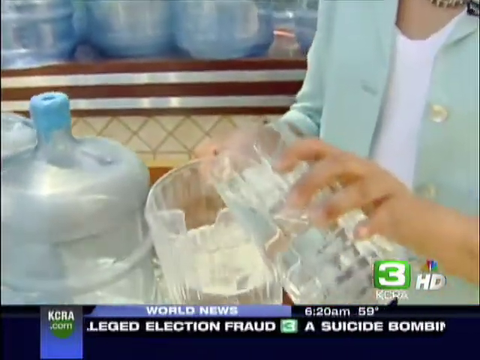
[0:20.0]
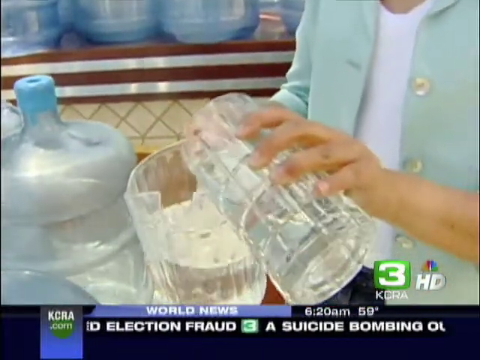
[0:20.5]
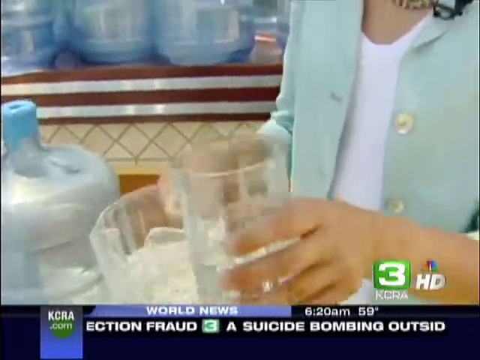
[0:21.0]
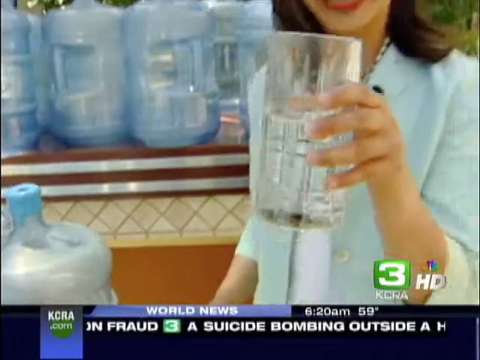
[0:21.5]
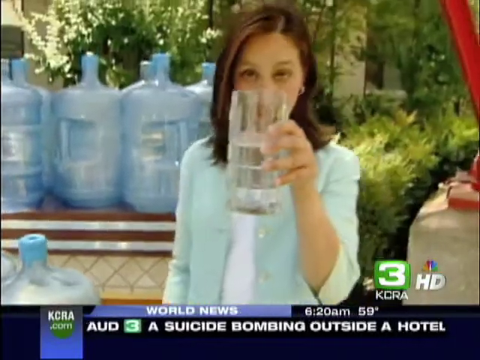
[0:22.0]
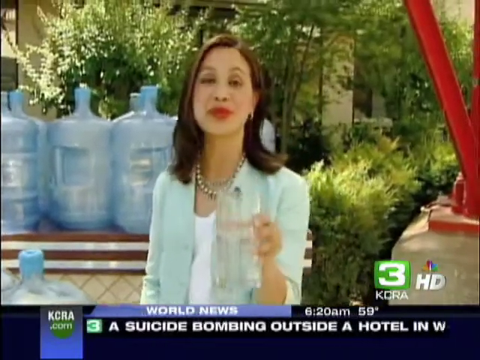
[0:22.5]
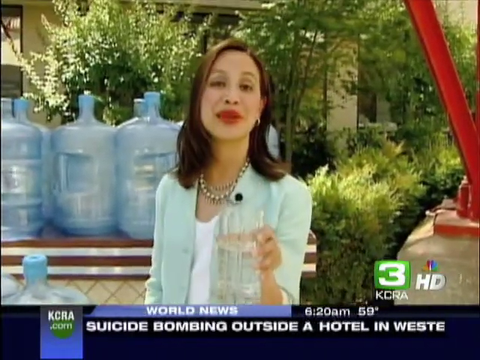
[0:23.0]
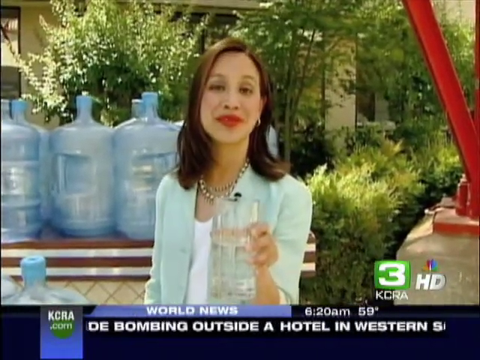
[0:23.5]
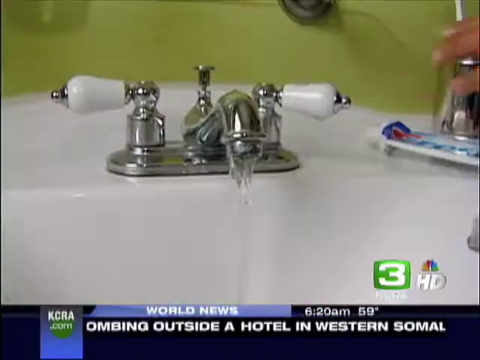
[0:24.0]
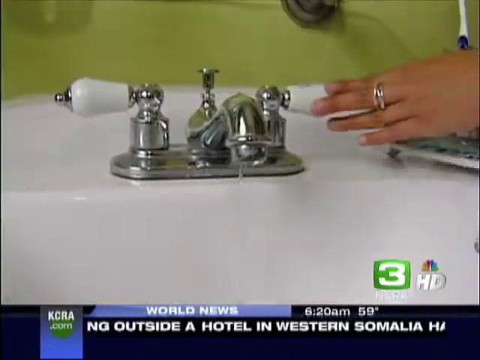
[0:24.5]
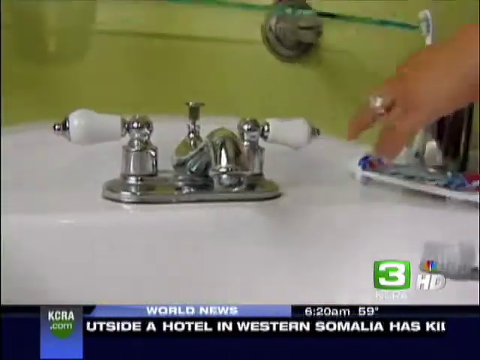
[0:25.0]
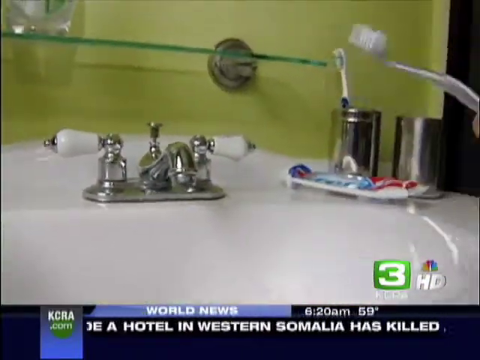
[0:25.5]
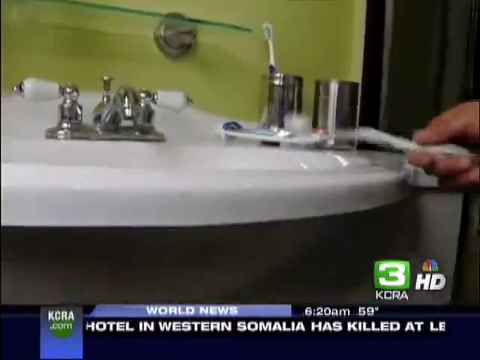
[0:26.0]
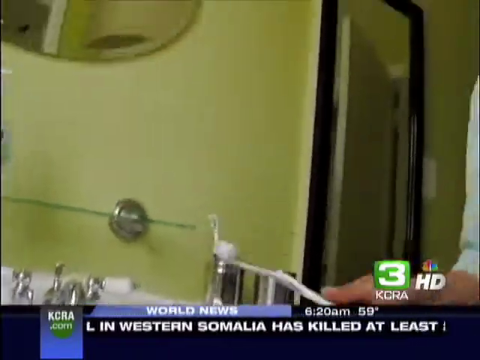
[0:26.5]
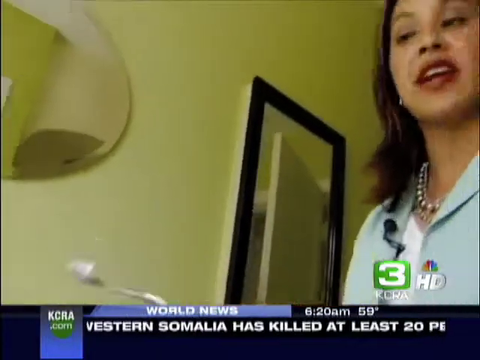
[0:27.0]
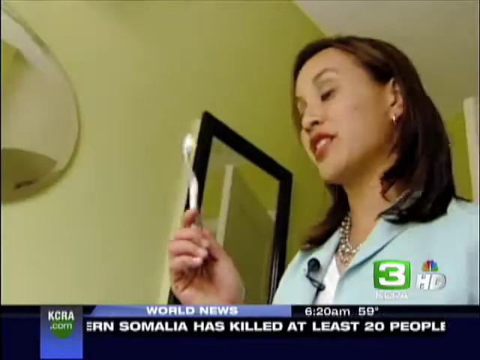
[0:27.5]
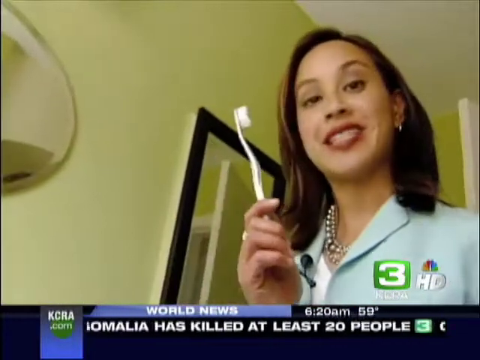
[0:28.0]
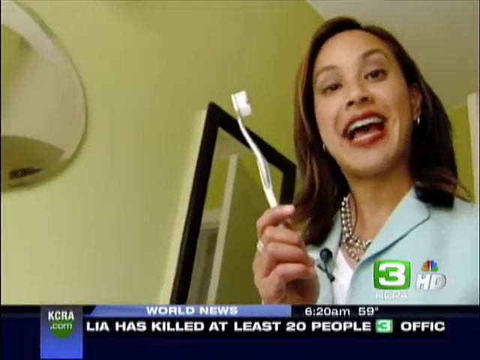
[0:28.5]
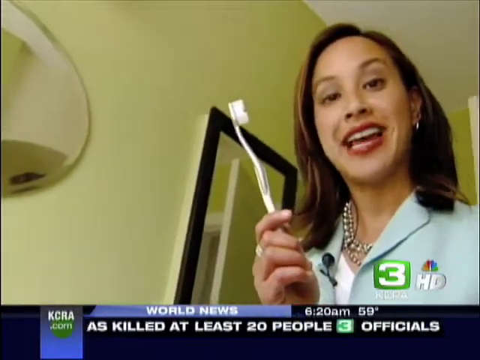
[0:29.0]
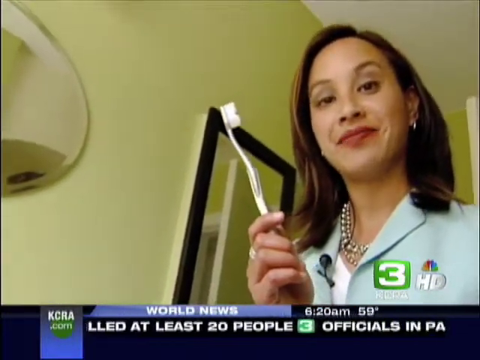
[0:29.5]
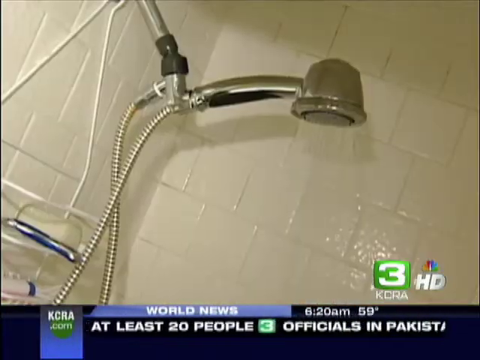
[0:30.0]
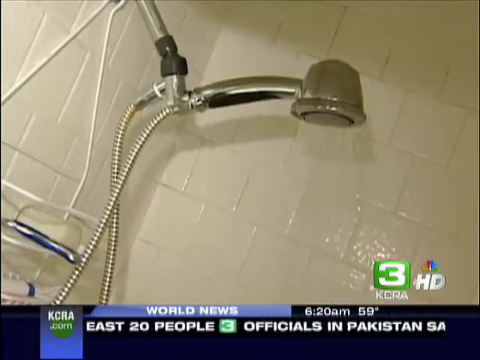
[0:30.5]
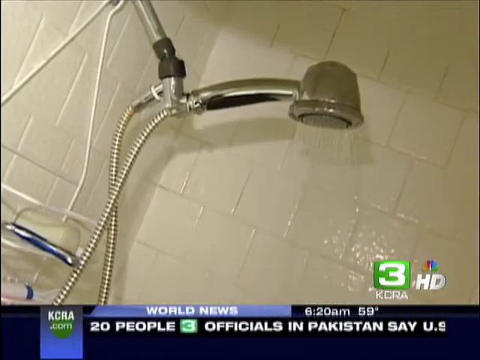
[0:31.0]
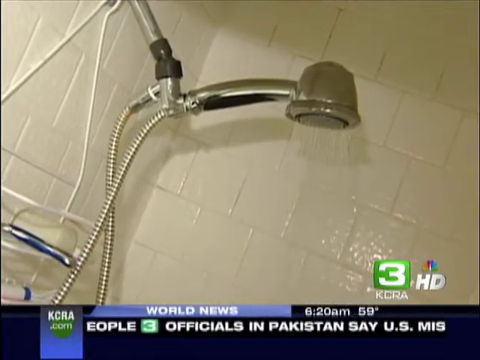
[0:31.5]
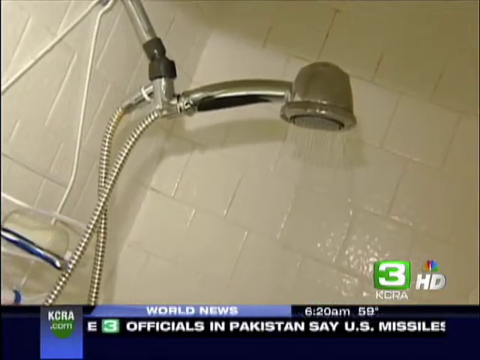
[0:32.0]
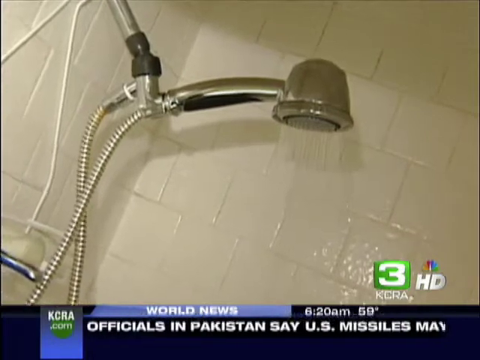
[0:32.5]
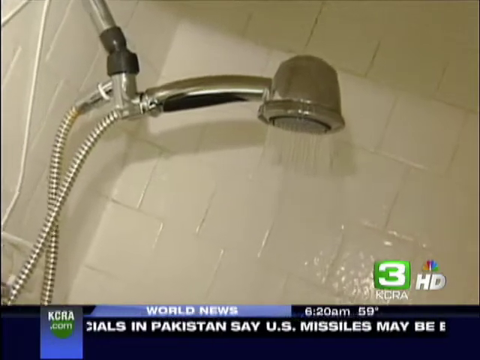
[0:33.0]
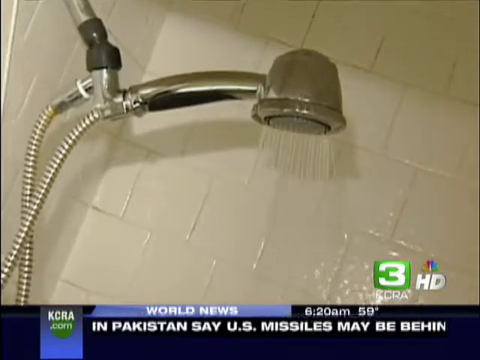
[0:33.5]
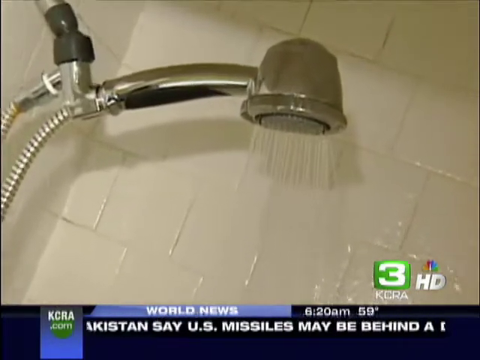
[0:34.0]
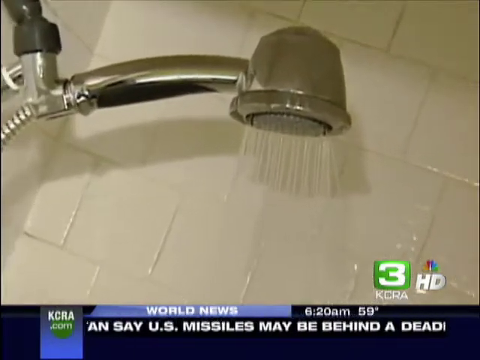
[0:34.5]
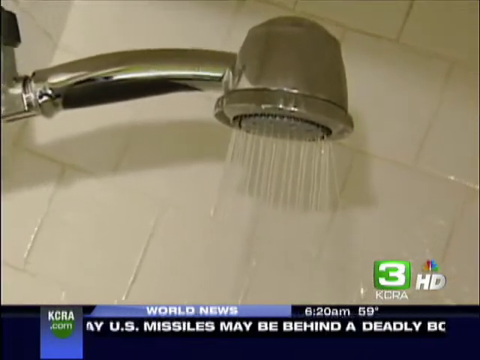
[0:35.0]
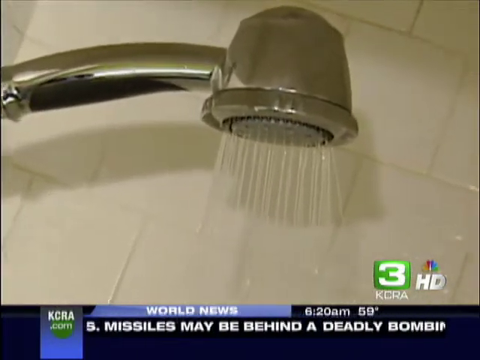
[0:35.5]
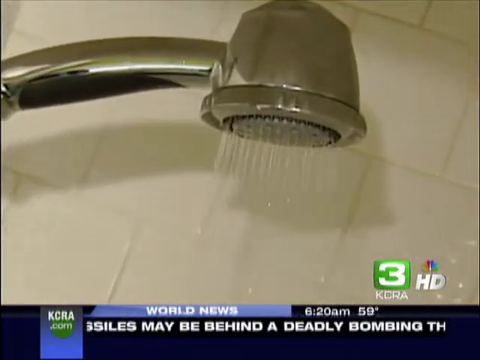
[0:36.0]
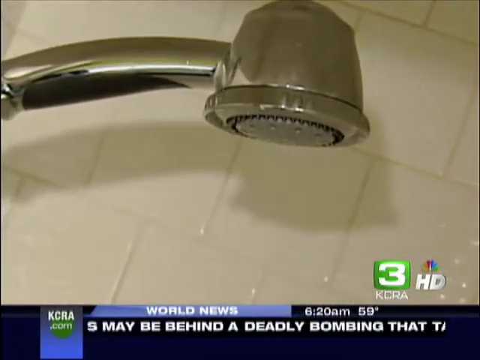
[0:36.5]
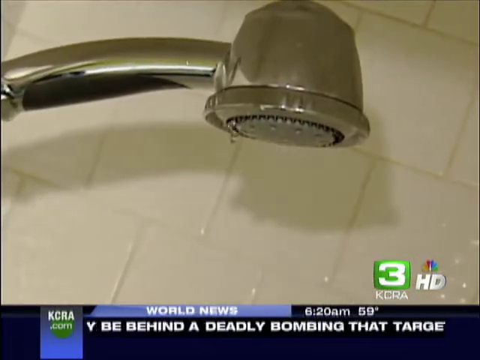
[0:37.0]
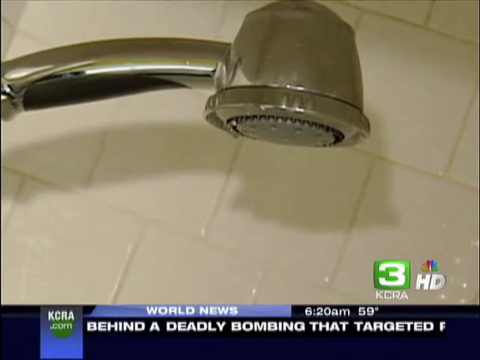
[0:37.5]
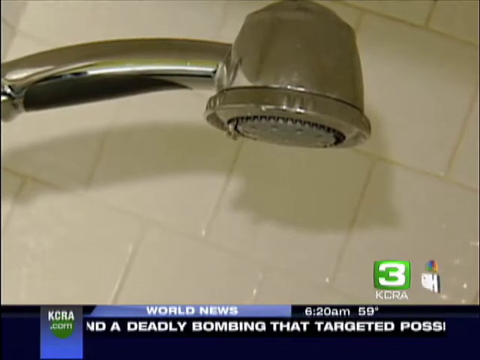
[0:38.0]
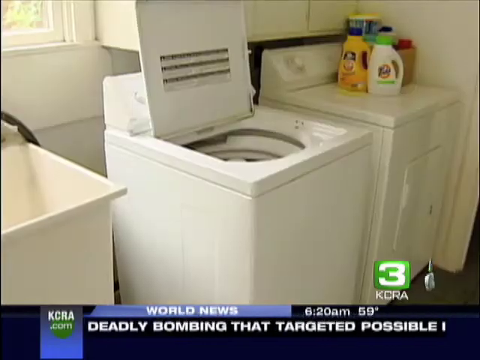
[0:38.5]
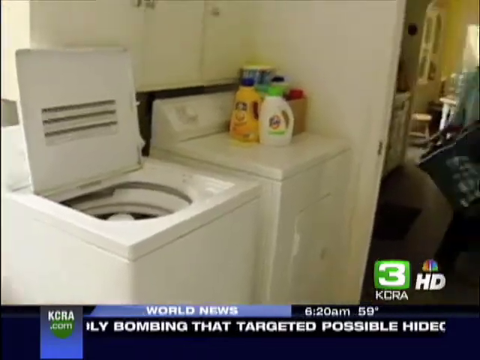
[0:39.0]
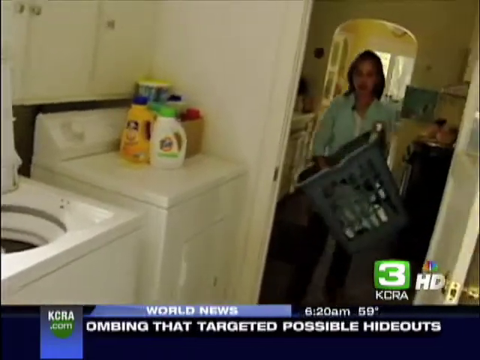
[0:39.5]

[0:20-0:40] The woman holds the water in her hand and points it straight at the camera, looking into the camera and talking. She wears a blue blazer with a white blouse underneath, has dark hair and wears red lipstick. A sink is shown with toothpaste next to it and a toothbrush, against a yellow wall. The same woman then holds the toothbrush in her hand, holding it toward the camera as she talks about it. Next, a silver-looking shower head with running water is shown as the camera zooms in on it; the water stops, and only drips of water fall. After that, a washer and dryer are shown, and the woman holds a basket of laundry. In a big, bathroom-like room, she goes toward the washer and dryer, about to put some kind of towel or laundry into the dryer, though she has not done it yet.